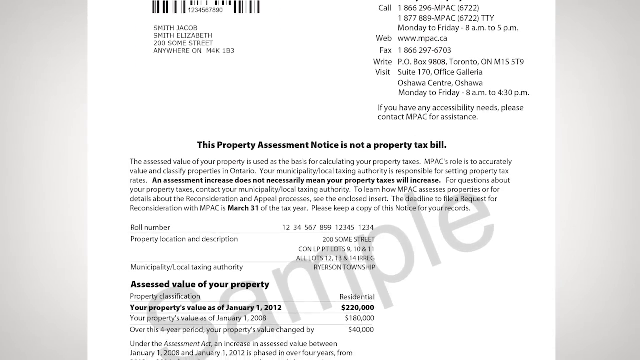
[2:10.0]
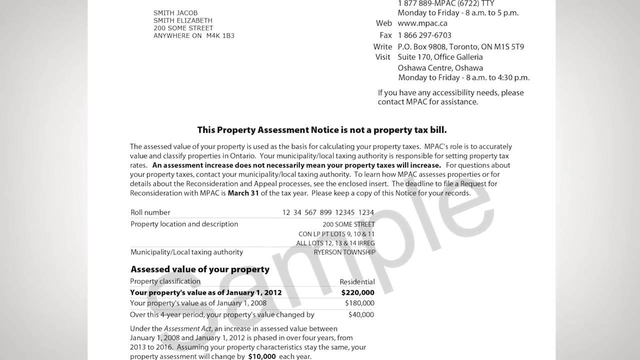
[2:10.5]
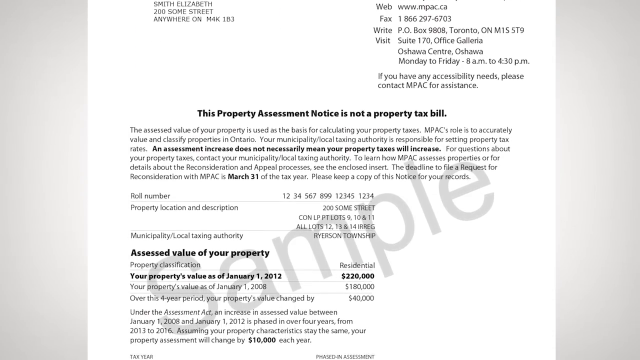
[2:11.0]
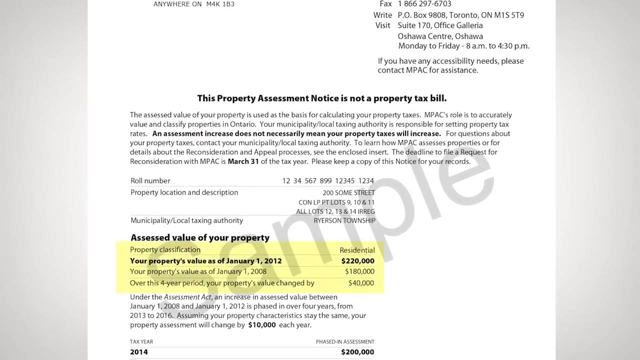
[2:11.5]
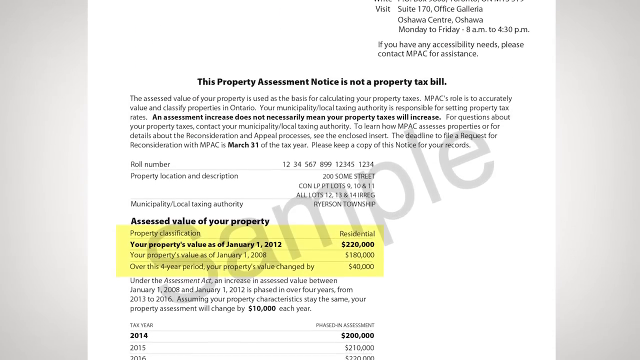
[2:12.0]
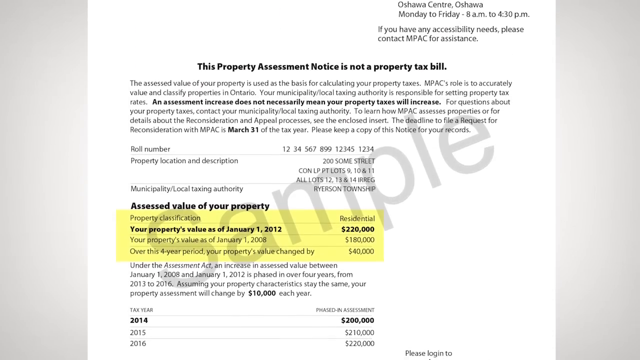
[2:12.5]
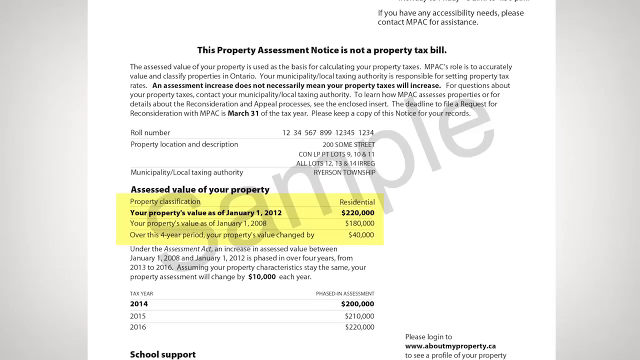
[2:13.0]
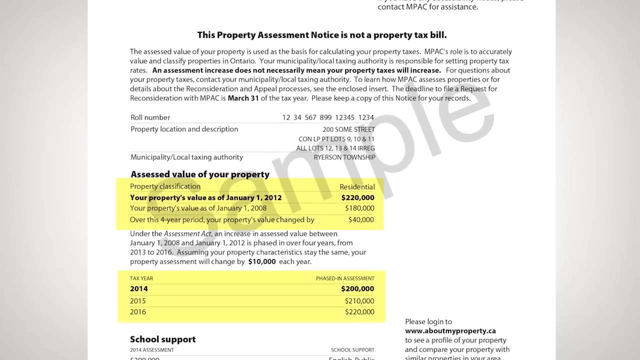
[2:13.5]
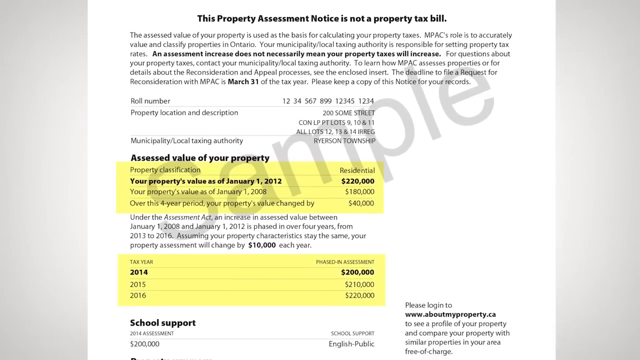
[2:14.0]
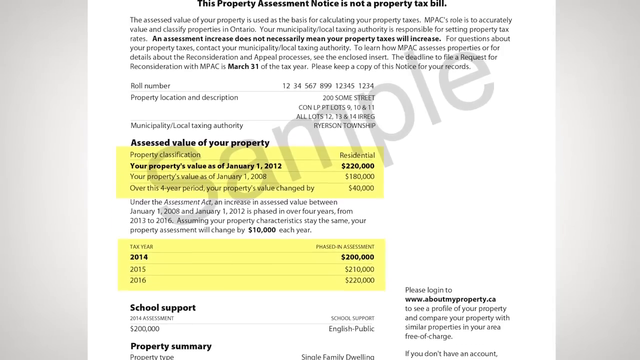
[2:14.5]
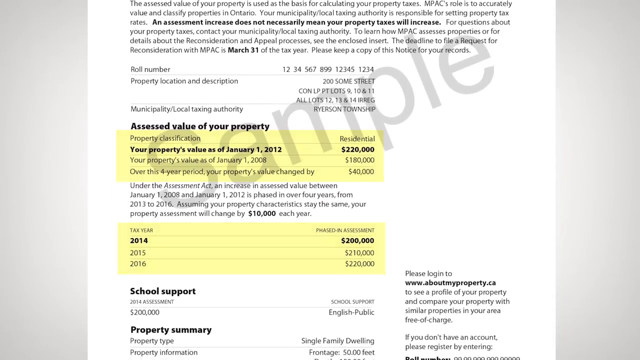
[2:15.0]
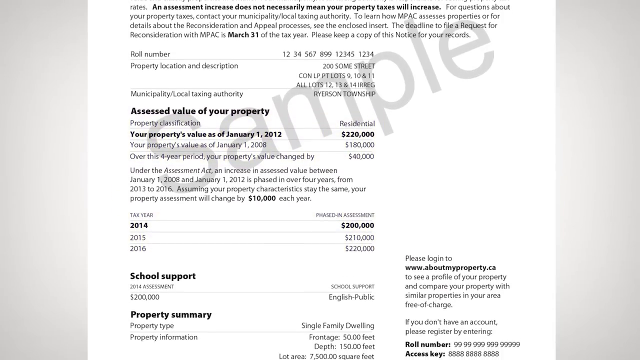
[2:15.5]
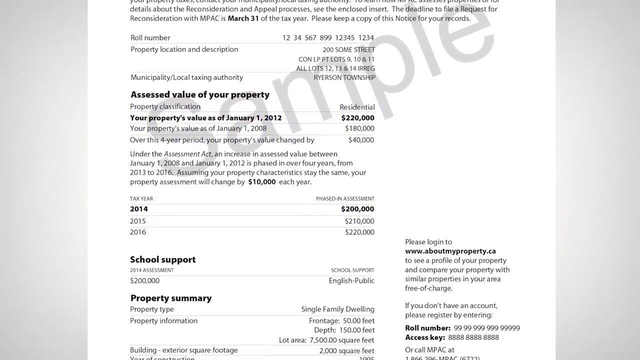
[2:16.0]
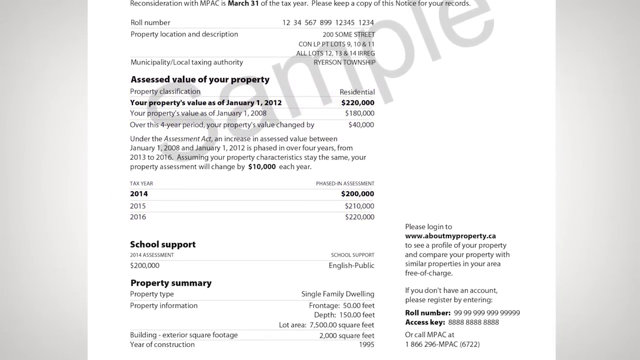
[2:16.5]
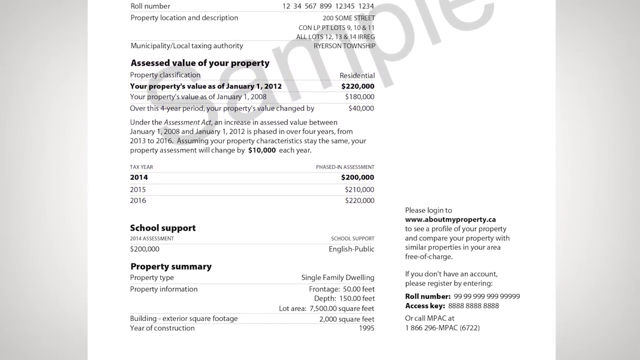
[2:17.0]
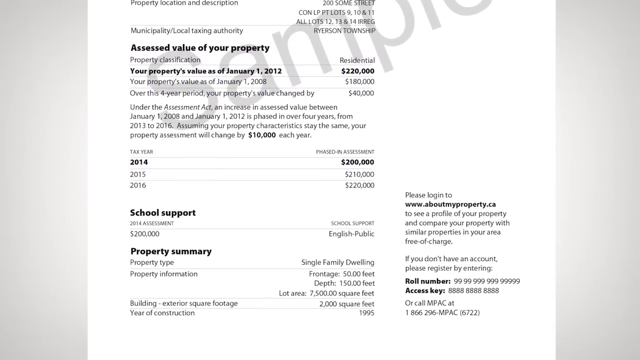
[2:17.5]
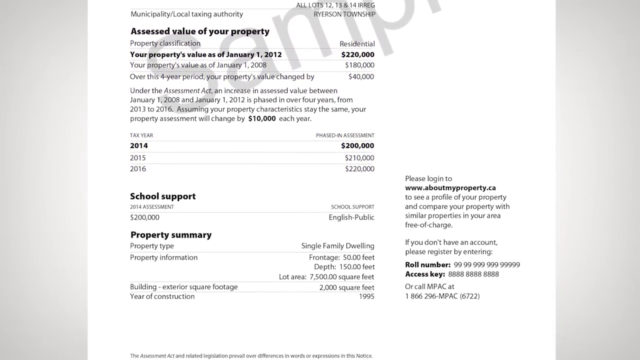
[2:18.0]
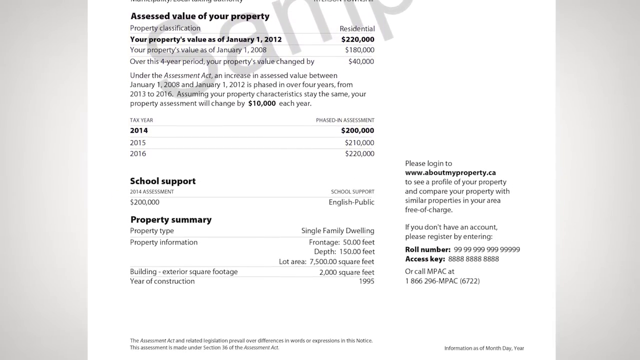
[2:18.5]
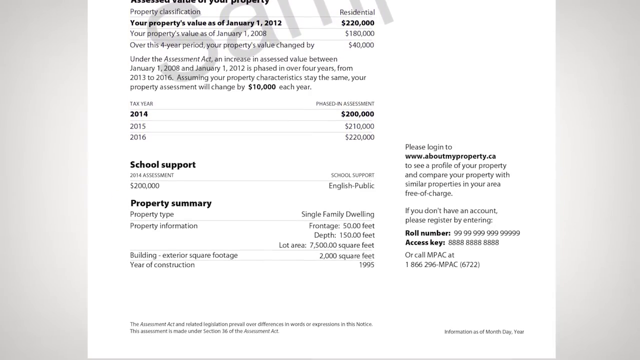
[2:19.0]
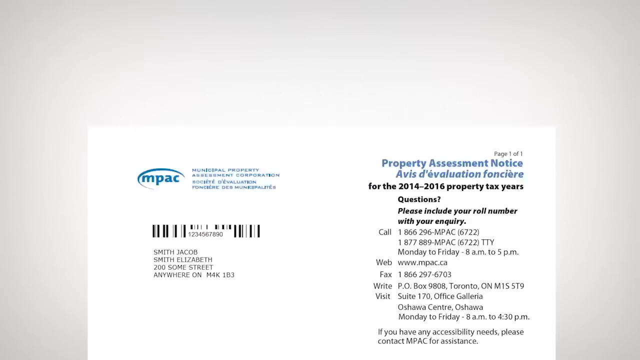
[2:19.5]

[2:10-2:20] An image of an official-looking document or letter is shown on the screen, titled "this property assessment notice is not a property tax bill". The view scrolls the letter up to reveal the text below. Several areas of the letter are highlighted in yellow, particularly the "assessed value of your property" section and the various tax years.